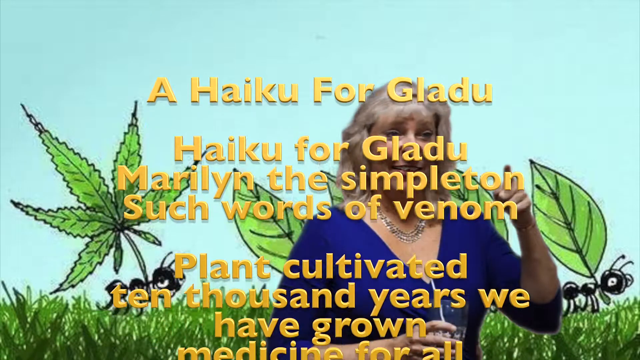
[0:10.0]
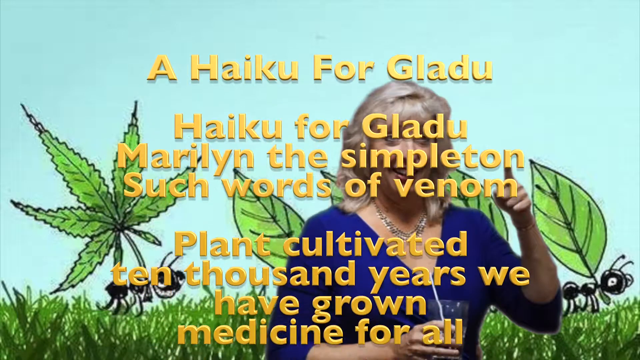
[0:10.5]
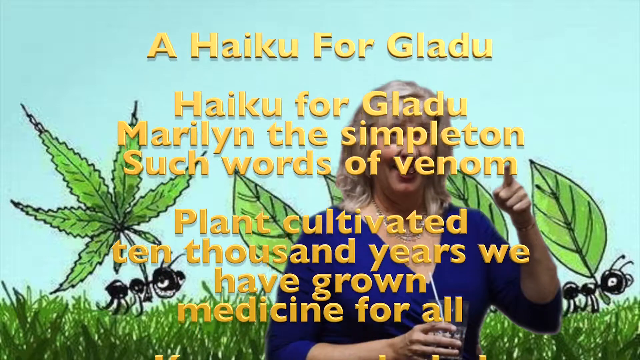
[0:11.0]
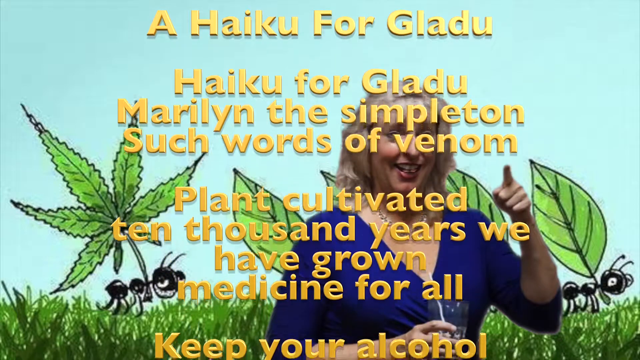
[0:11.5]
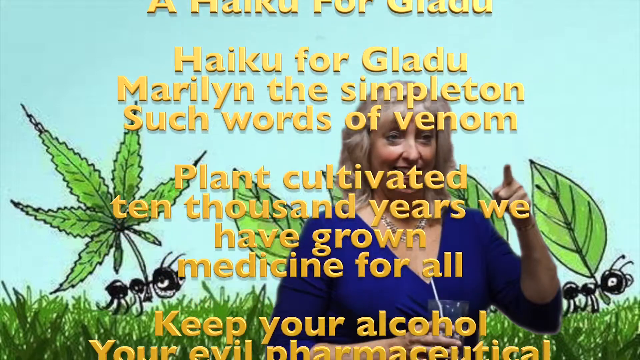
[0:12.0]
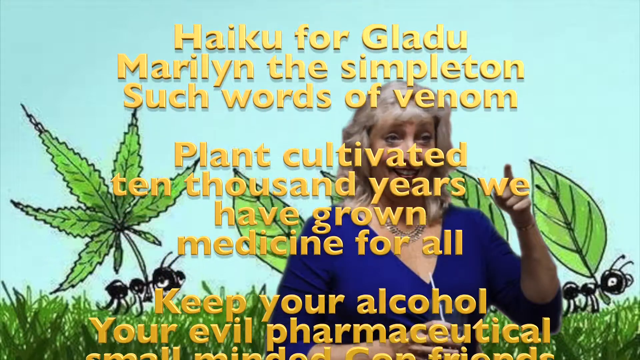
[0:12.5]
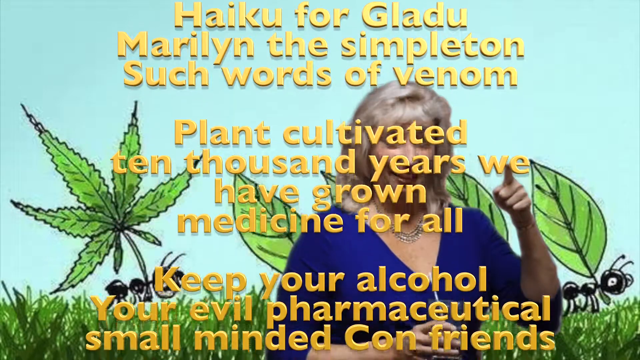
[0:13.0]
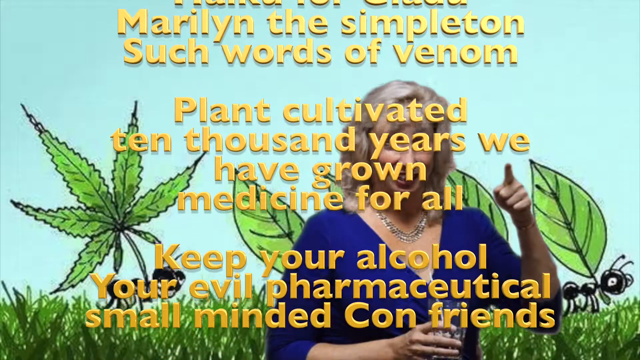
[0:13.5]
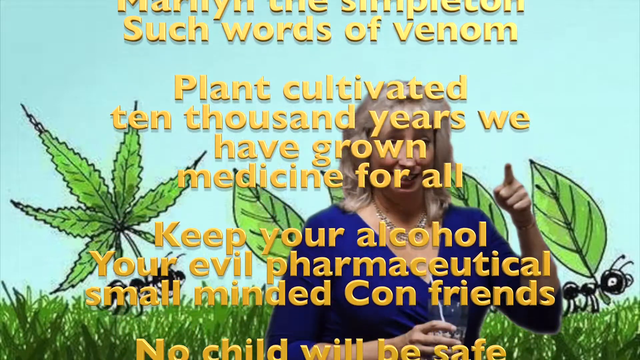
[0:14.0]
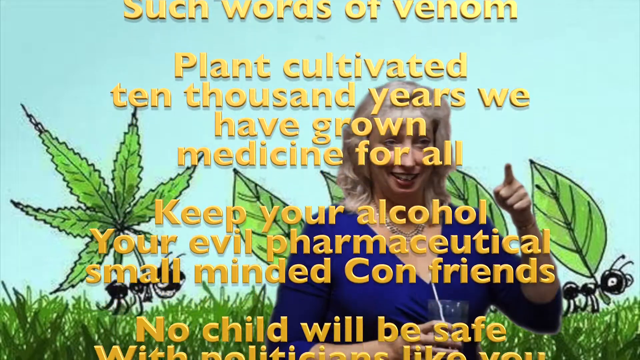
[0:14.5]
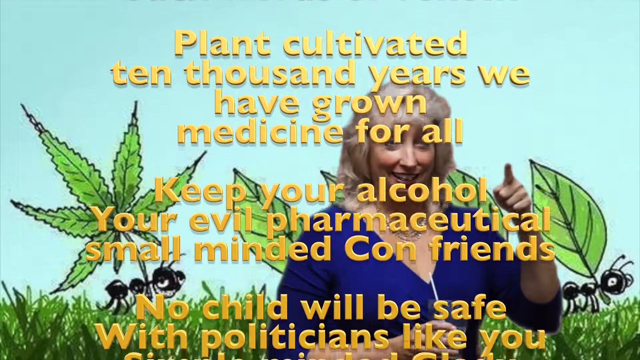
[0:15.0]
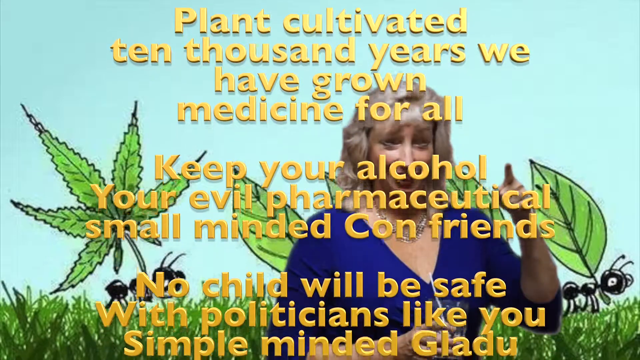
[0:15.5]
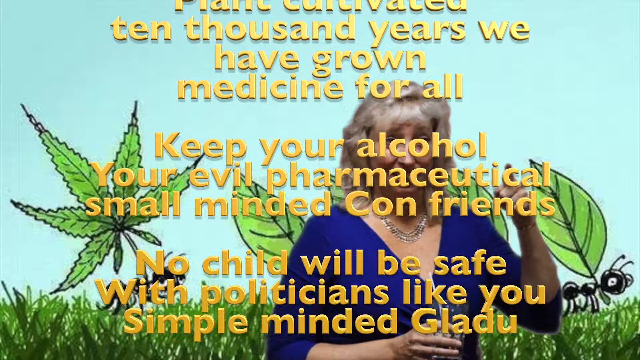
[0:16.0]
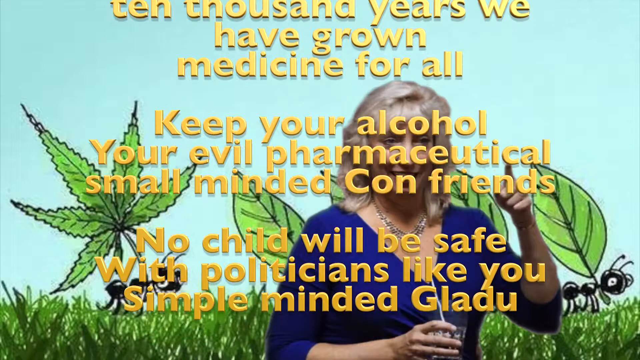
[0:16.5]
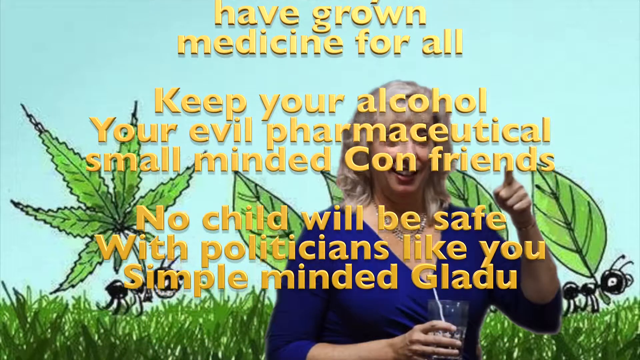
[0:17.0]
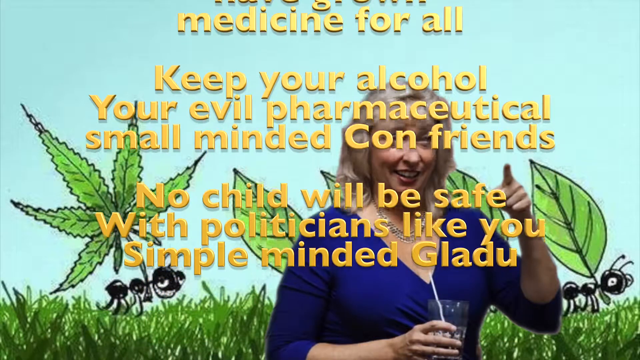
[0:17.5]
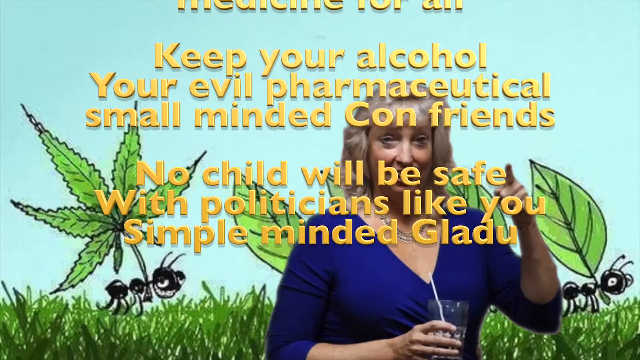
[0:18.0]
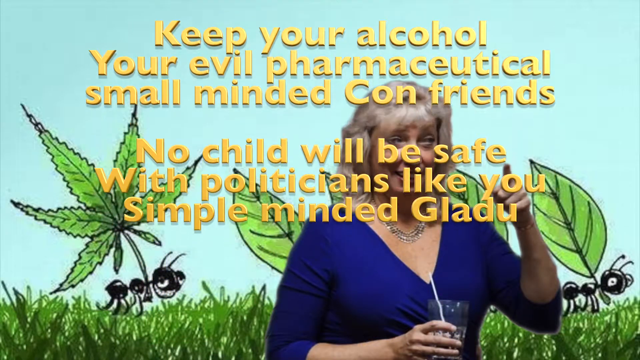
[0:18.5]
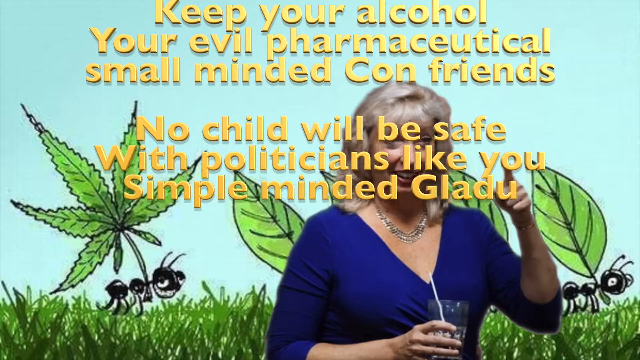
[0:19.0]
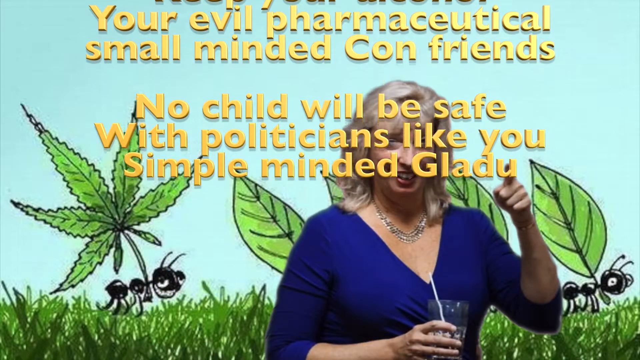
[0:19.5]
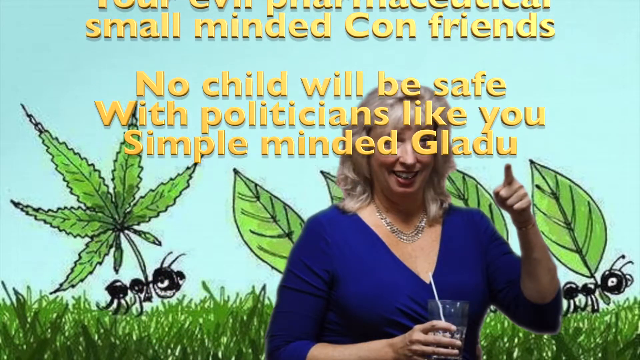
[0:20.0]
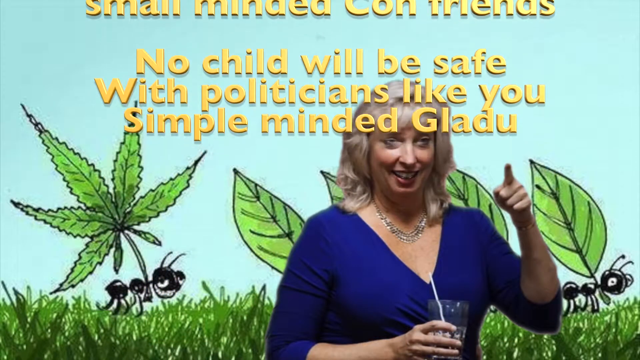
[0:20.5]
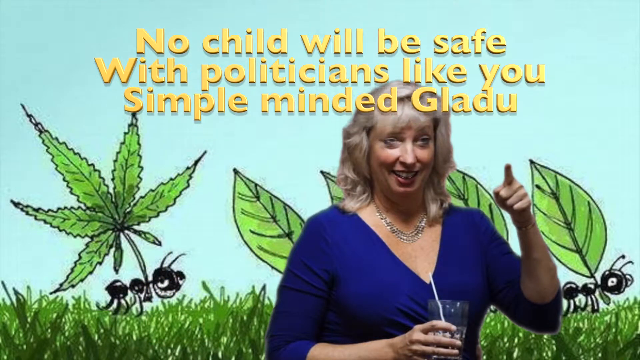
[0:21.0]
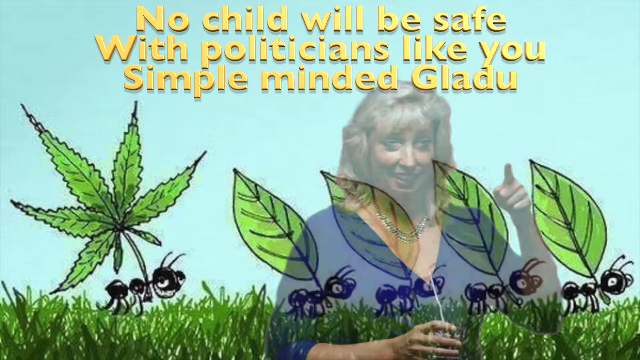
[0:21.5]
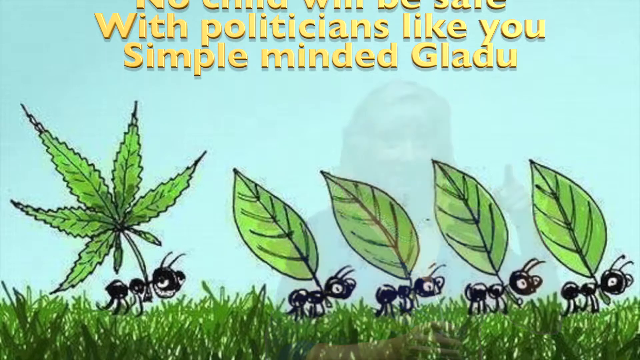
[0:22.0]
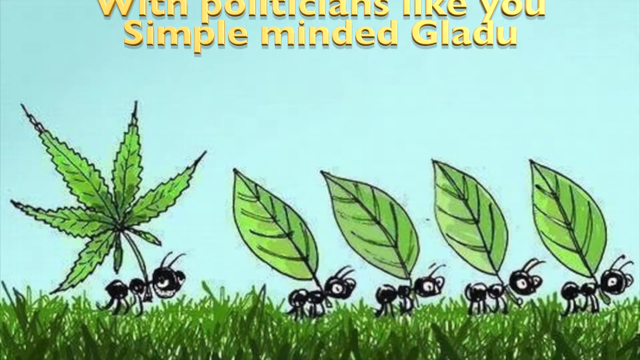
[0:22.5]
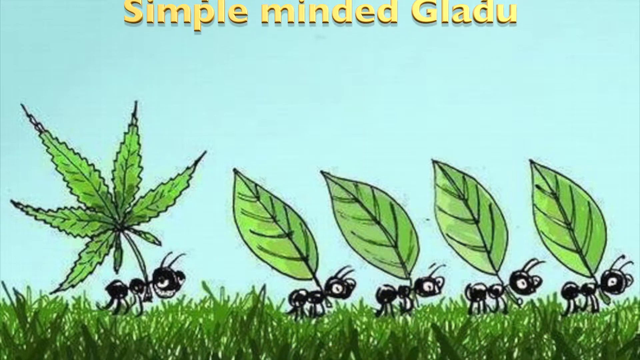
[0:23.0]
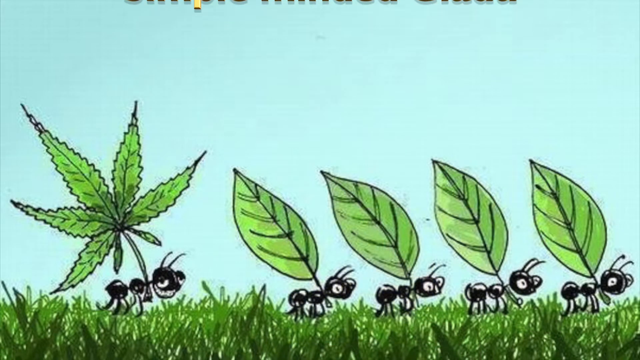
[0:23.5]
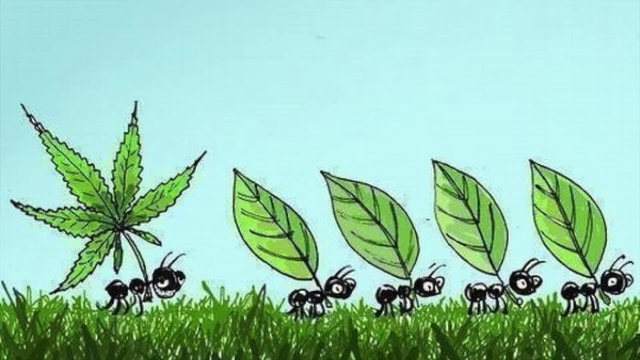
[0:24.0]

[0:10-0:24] The on-screen text reads "a haiku for gladu, haiku for gladu" and "such words of venom," followed by "Plant cultivated ten thousand years, we have grown medicine for all. Keep your alcohol, your evil pharmaceutical small-minded" and "No child will be safe with politicians like you, single-minded gladu." The text seems to be a political message criticizing the pharmaceutical company and depicting it as dangerous. In the background are five ants, each carrying a leaf. The last ant looks tired, carries a leaf different from the other ants' leaves, and is visibly struggling. The background is light blue.